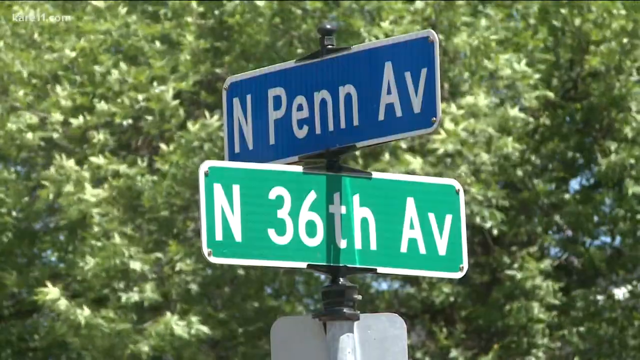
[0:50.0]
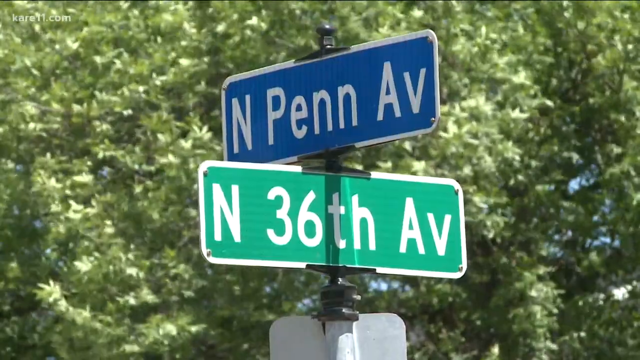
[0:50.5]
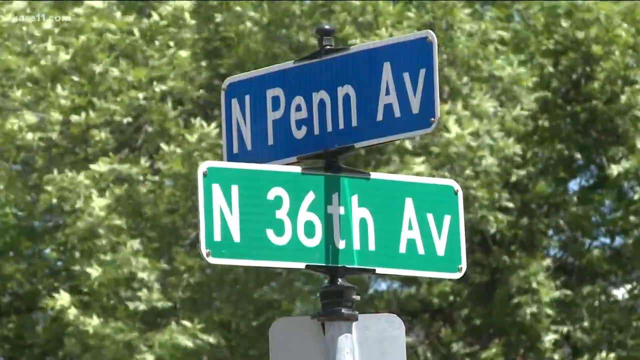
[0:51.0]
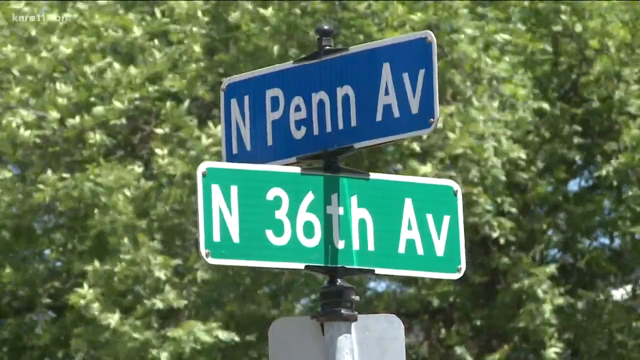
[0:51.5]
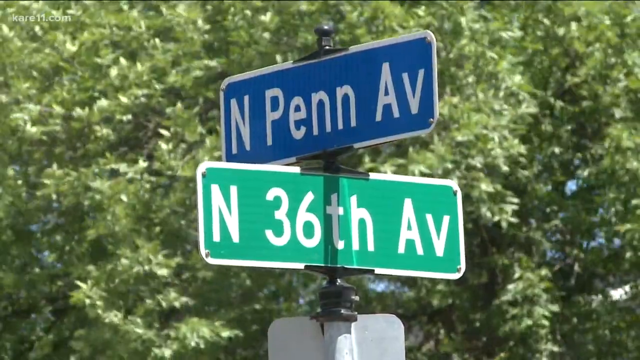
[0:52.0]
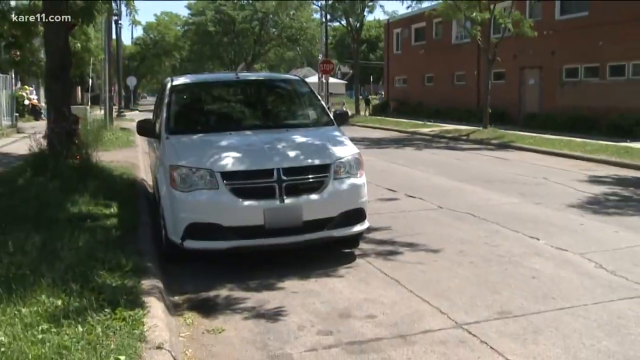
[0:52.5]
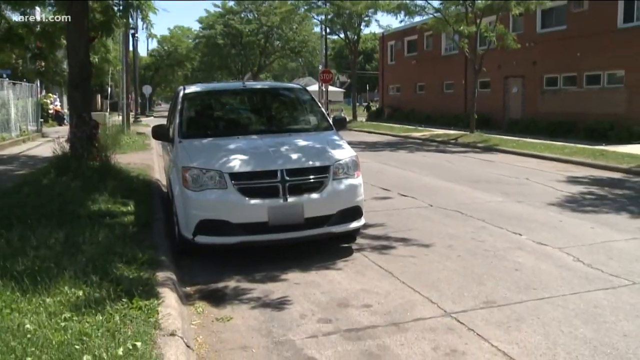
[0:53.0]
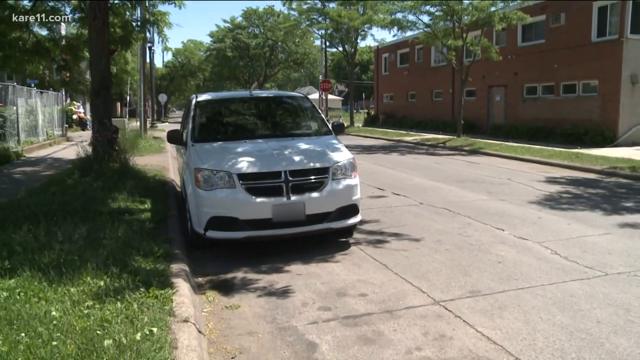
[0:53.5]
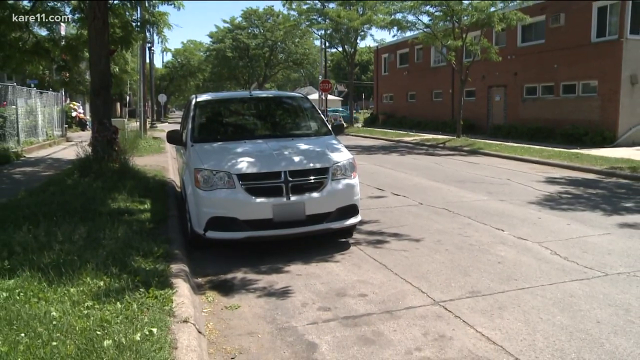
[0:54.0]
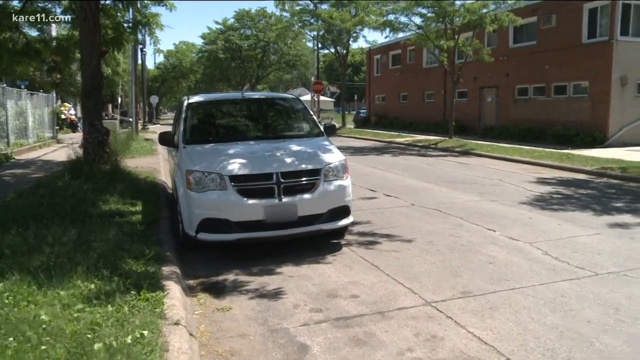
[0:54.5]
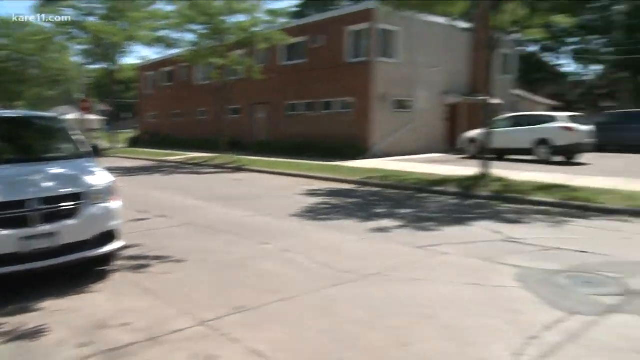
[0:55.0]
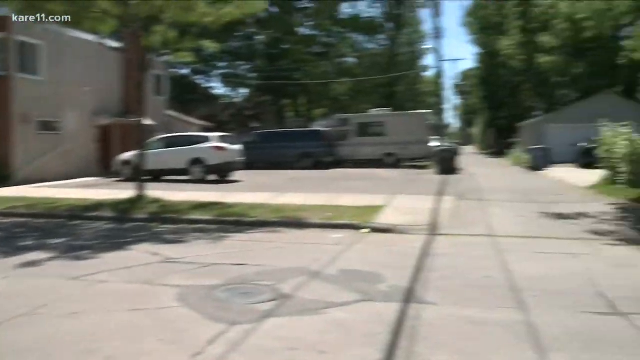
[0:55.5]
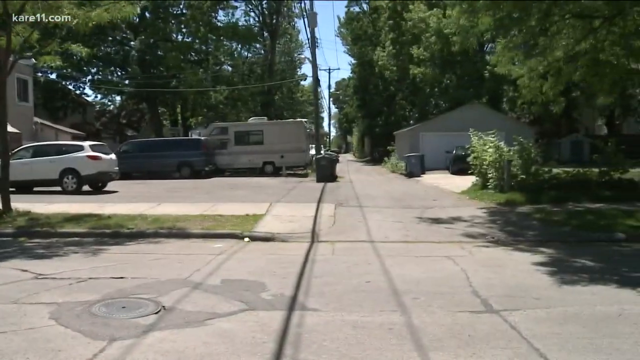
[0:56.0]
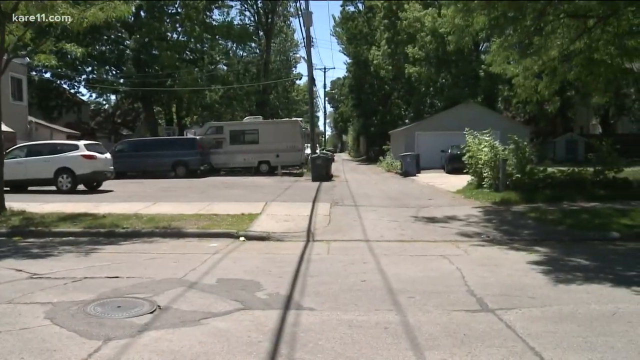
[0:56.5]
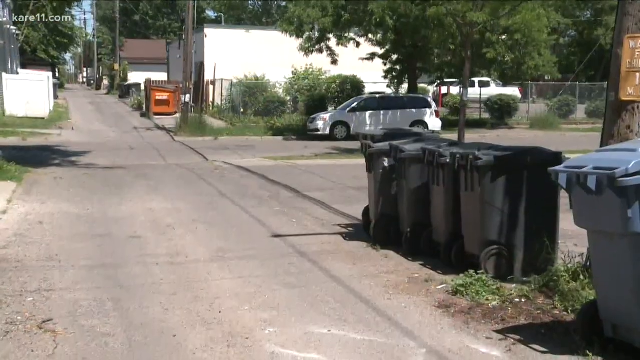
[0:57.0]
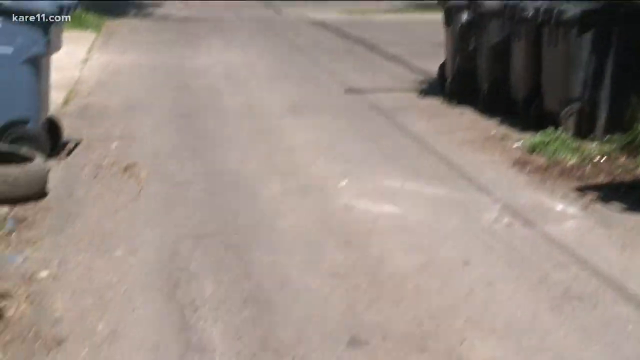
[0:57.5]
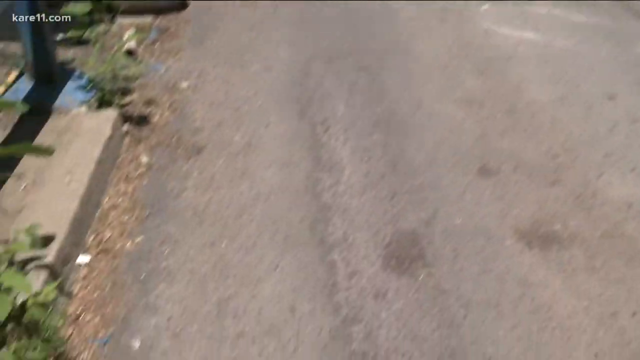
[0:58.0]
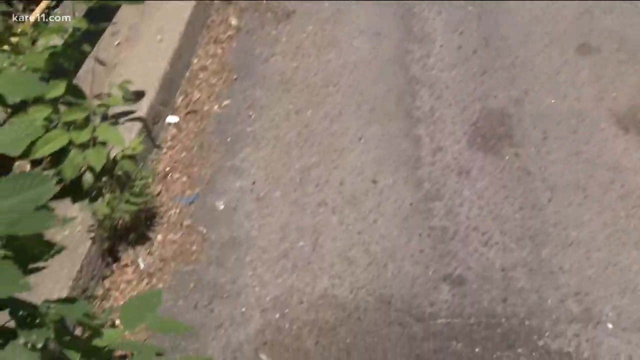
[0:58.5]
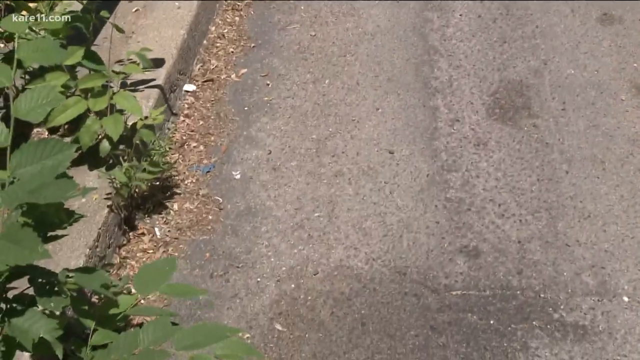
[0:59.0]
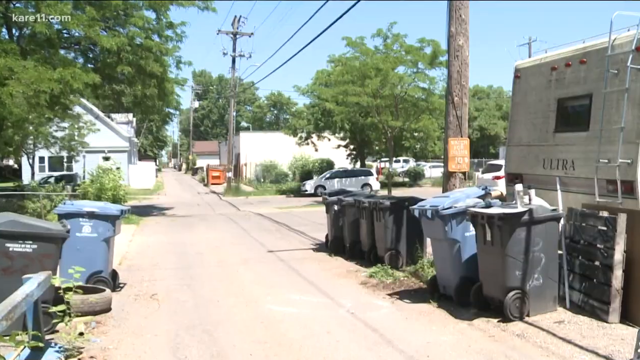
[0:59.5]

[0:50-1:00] A street corner appears with two street signs, one horizontal and one vertical. The top sign reads "N Penn Av" in white font on a blue background. Below it, a sign on a green background reads "N" and "W6 AV". A white minivan is visible. This is possibly where the shooting took place.